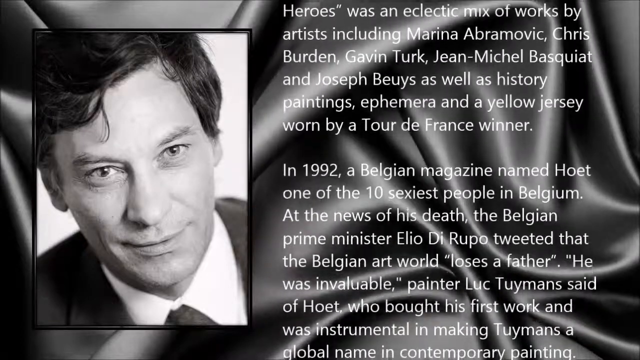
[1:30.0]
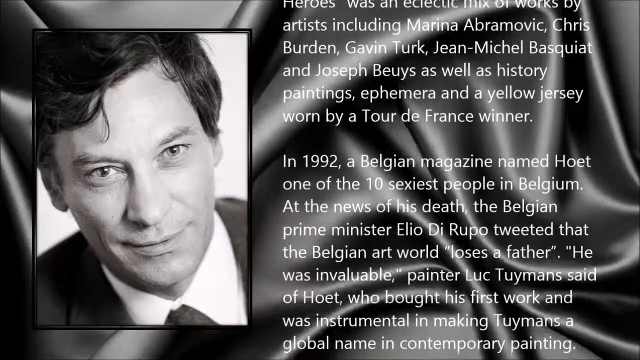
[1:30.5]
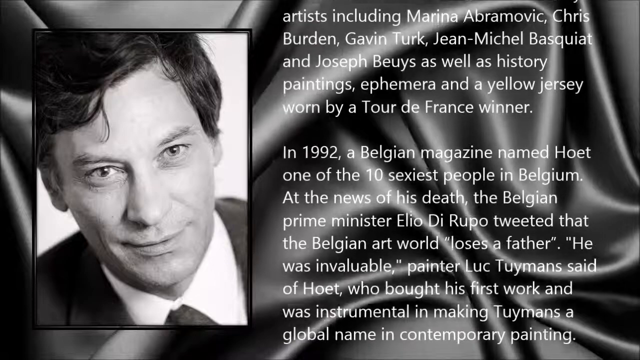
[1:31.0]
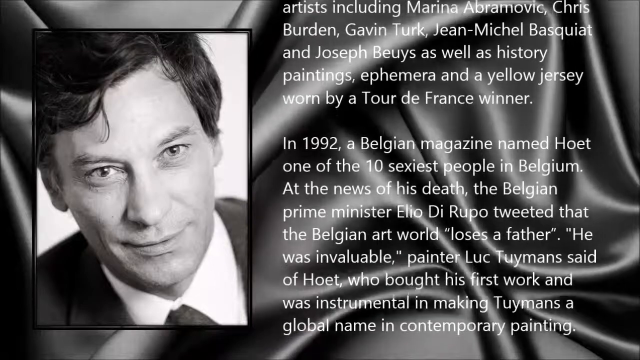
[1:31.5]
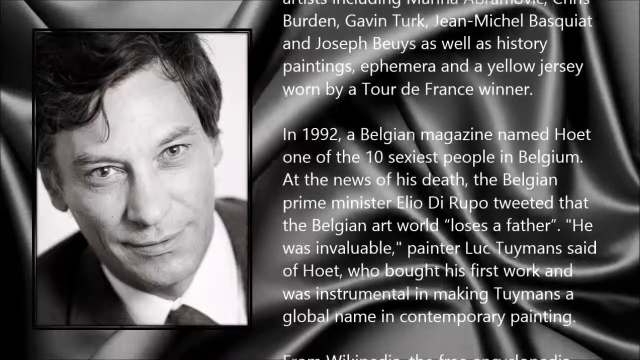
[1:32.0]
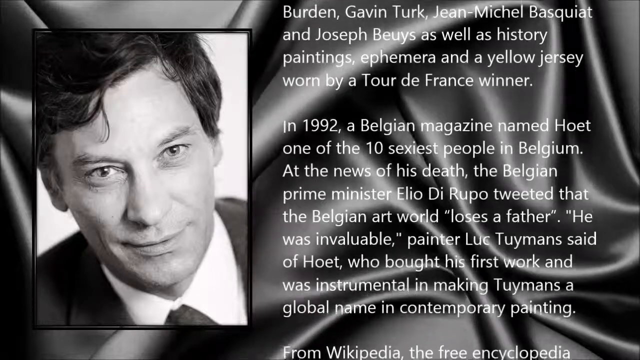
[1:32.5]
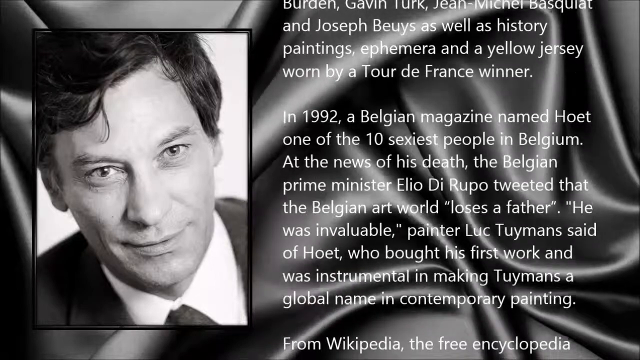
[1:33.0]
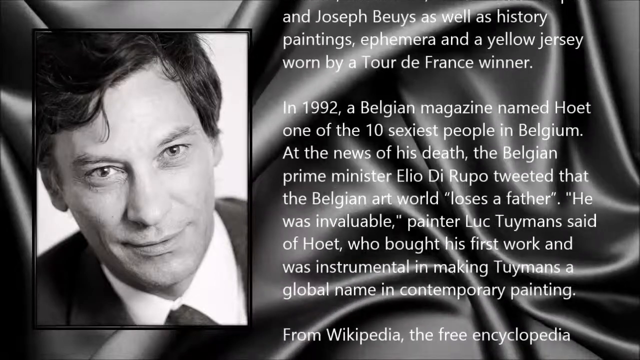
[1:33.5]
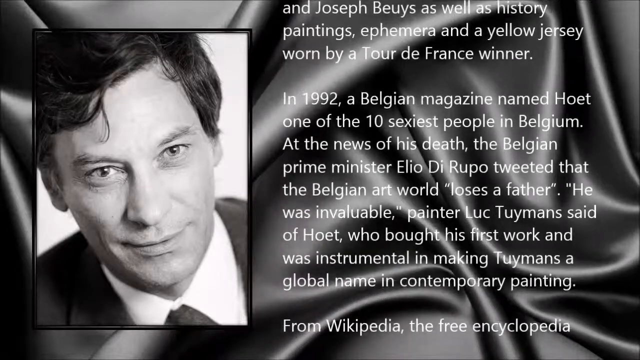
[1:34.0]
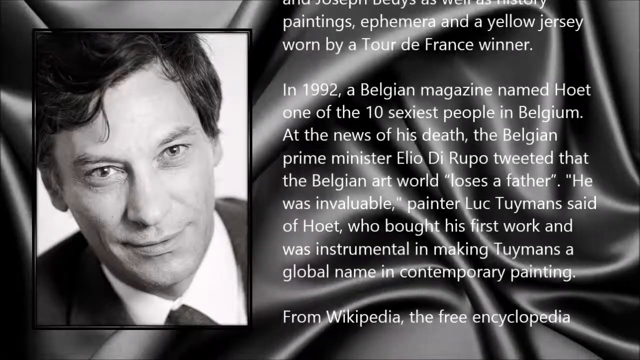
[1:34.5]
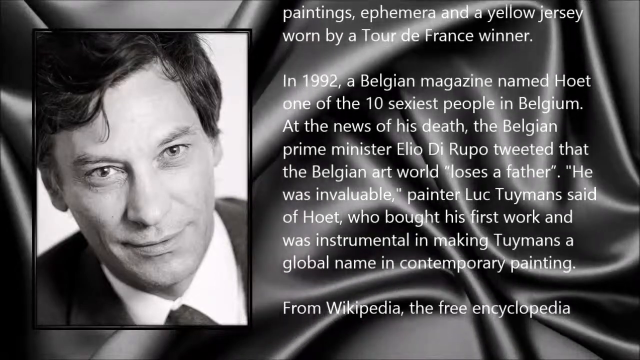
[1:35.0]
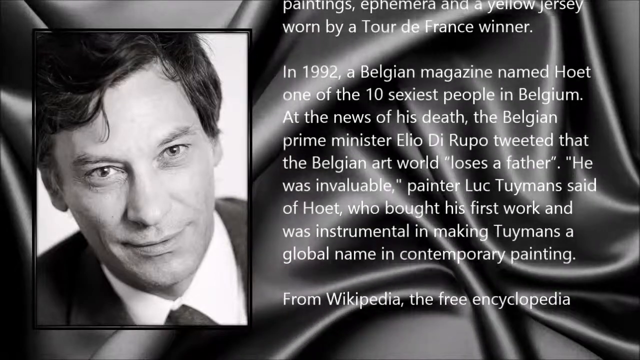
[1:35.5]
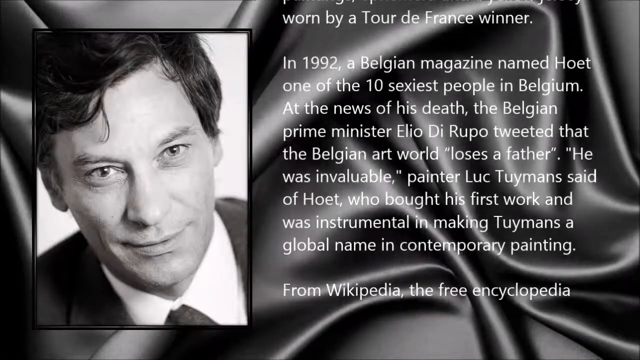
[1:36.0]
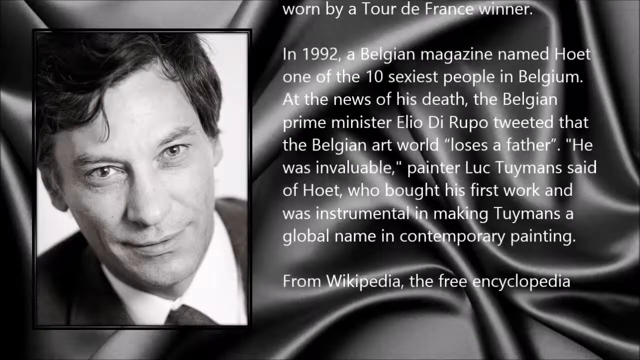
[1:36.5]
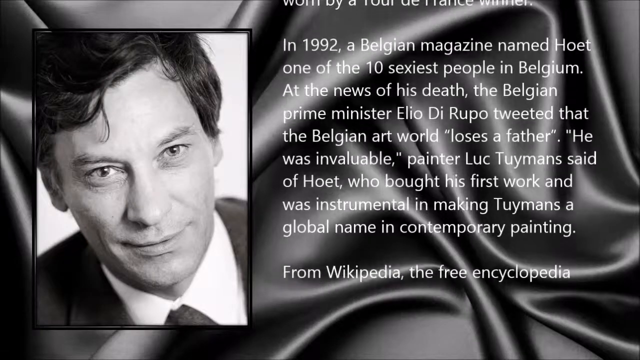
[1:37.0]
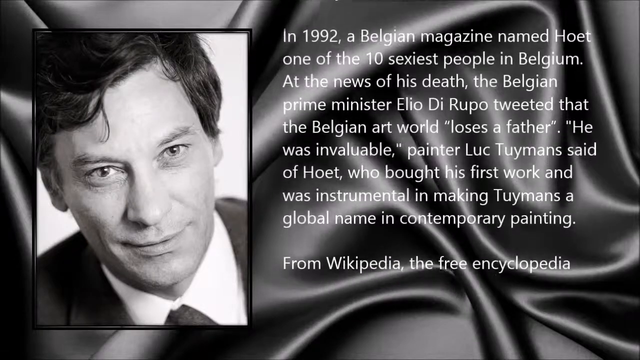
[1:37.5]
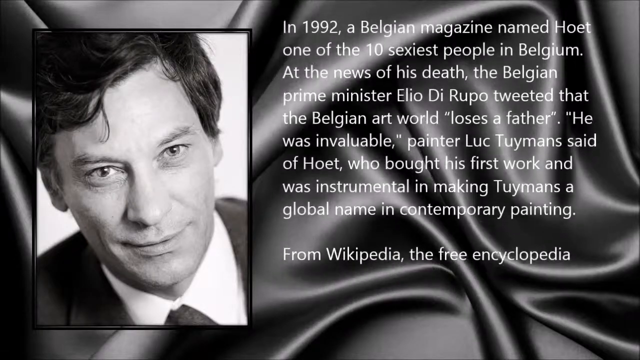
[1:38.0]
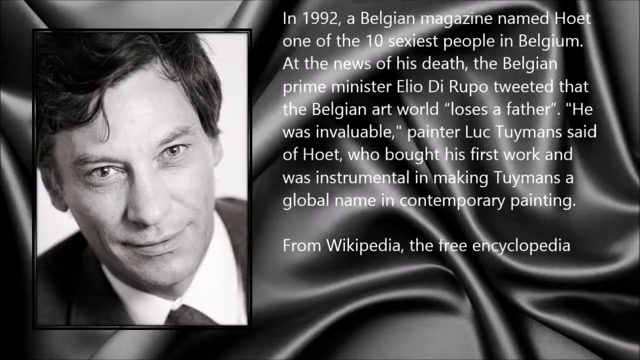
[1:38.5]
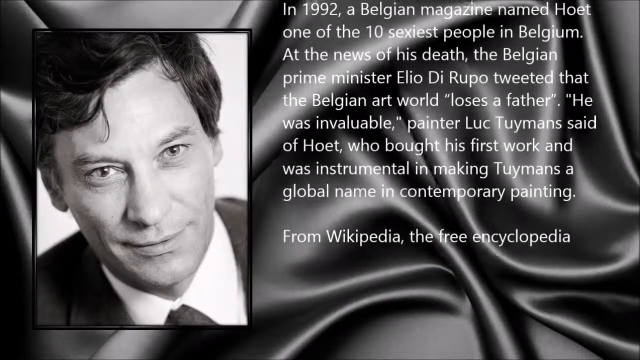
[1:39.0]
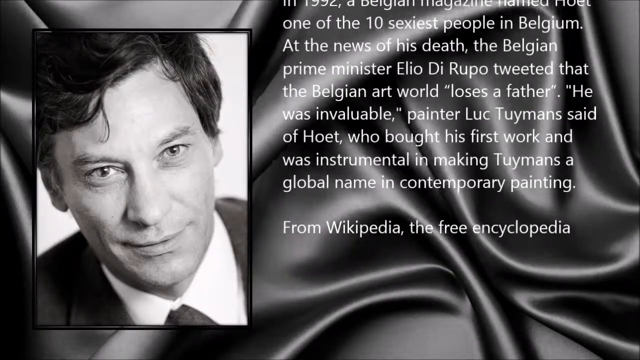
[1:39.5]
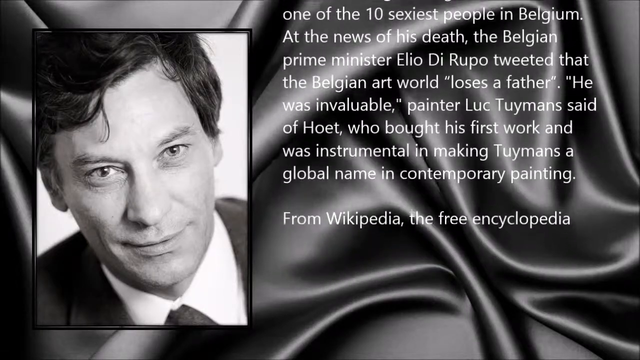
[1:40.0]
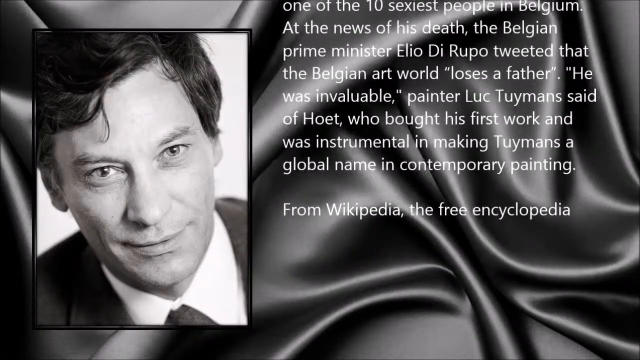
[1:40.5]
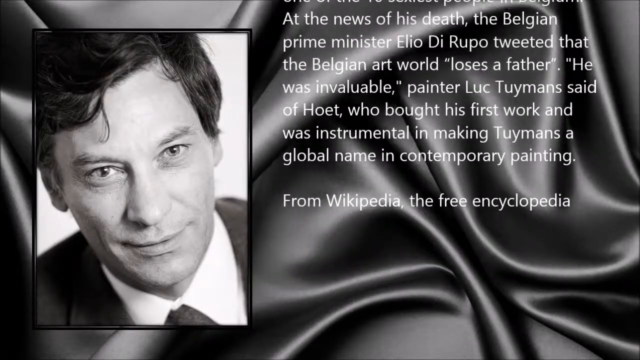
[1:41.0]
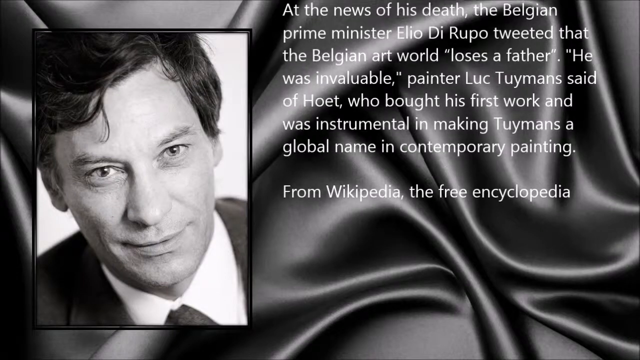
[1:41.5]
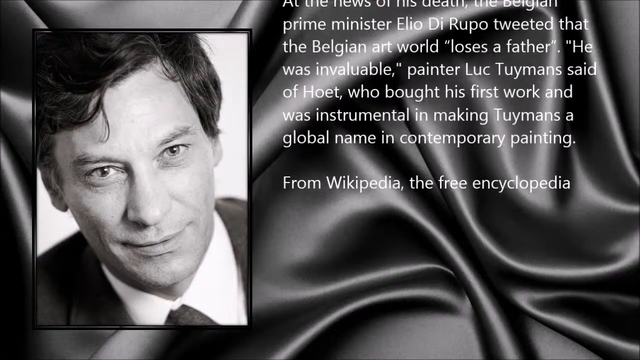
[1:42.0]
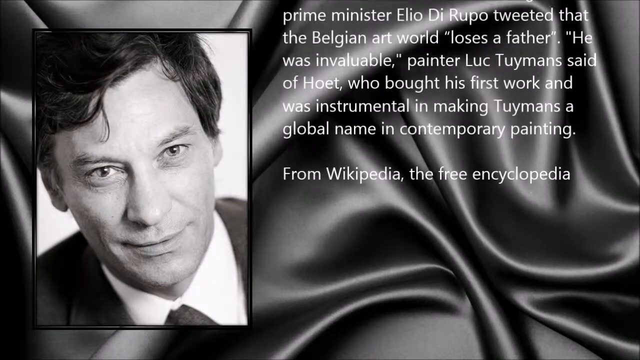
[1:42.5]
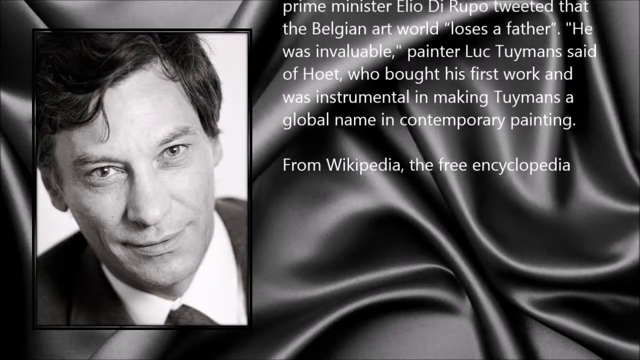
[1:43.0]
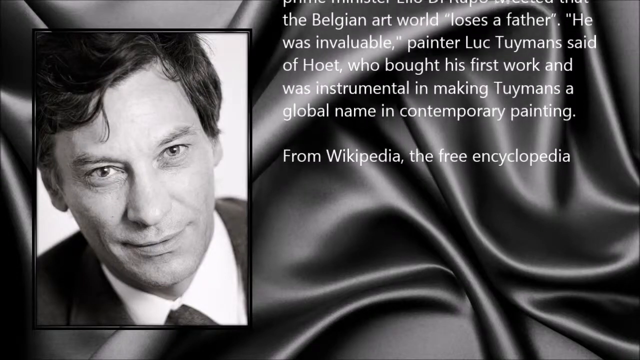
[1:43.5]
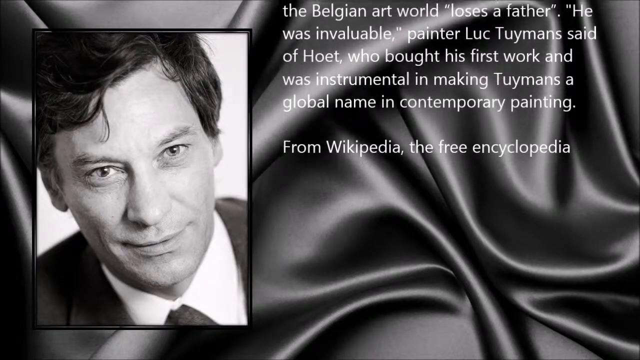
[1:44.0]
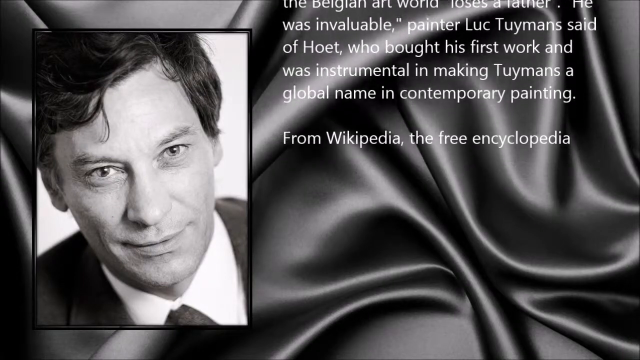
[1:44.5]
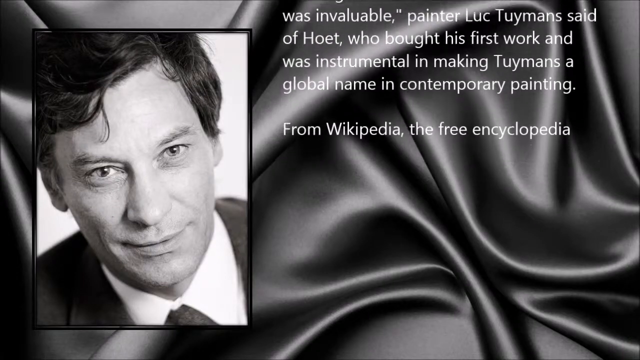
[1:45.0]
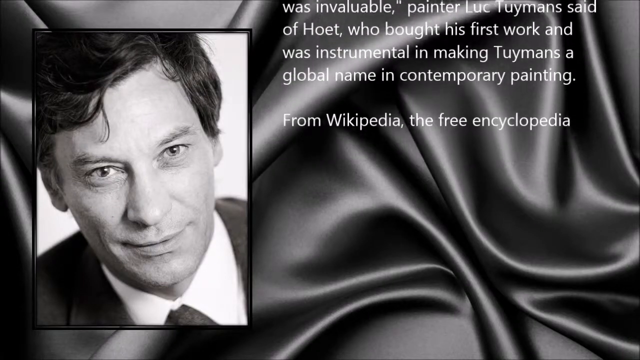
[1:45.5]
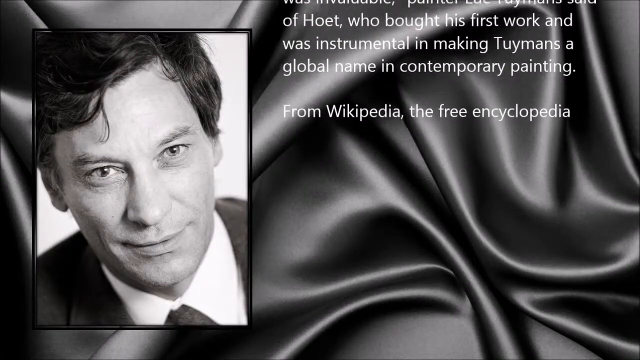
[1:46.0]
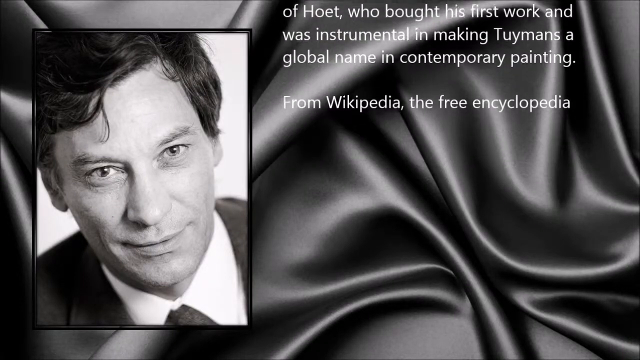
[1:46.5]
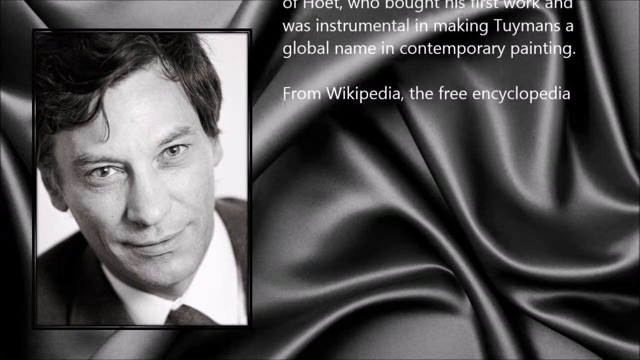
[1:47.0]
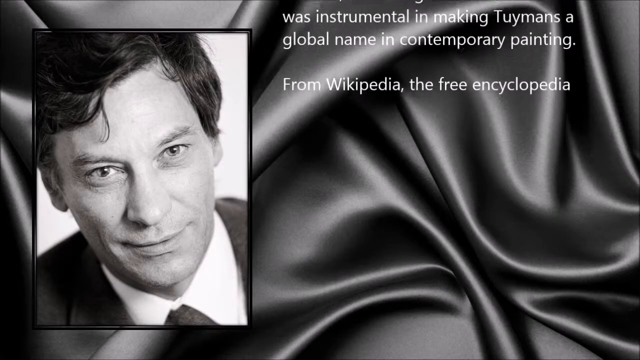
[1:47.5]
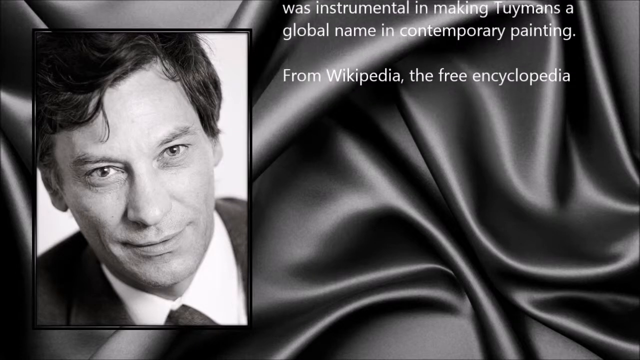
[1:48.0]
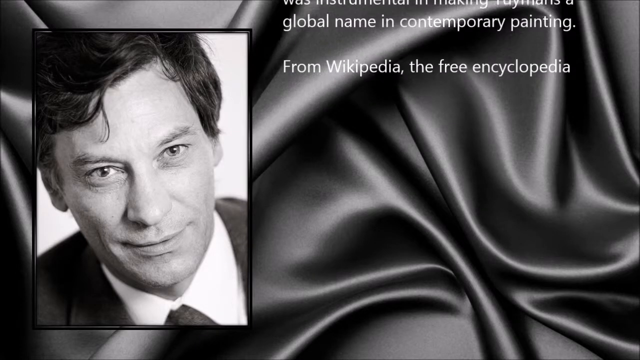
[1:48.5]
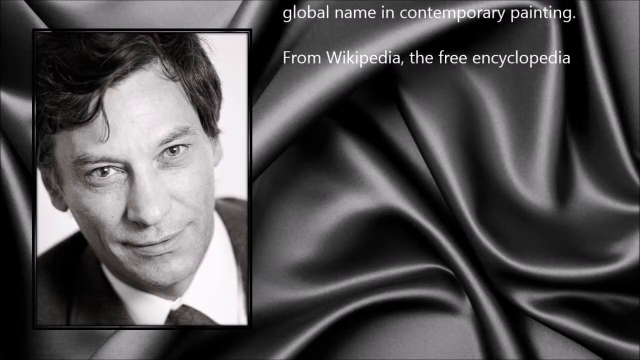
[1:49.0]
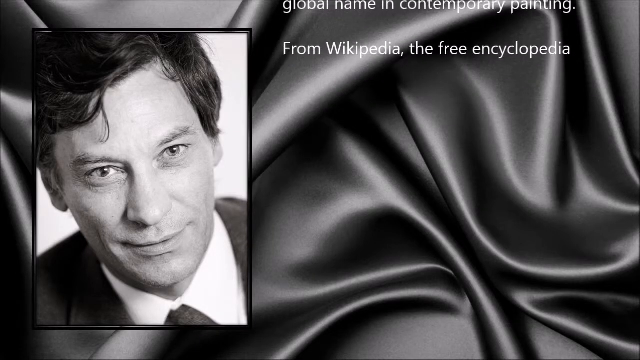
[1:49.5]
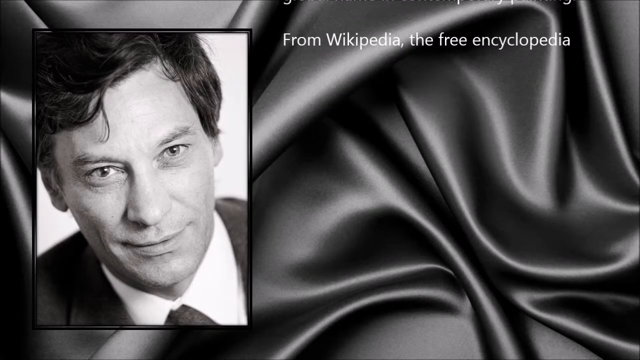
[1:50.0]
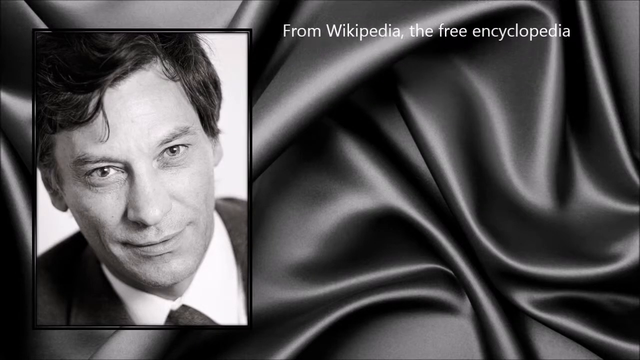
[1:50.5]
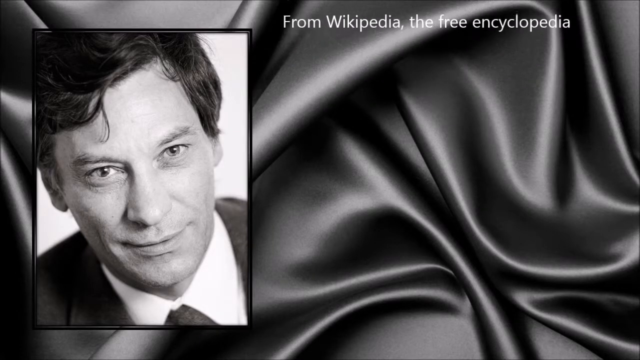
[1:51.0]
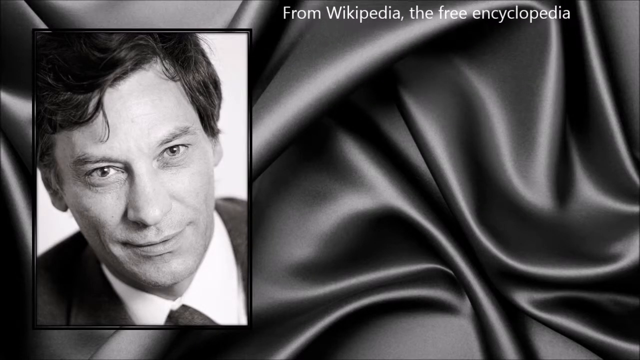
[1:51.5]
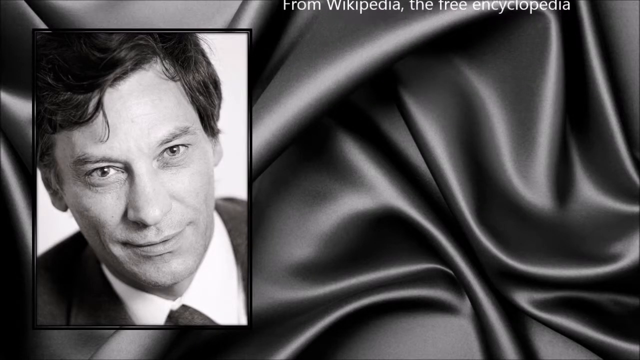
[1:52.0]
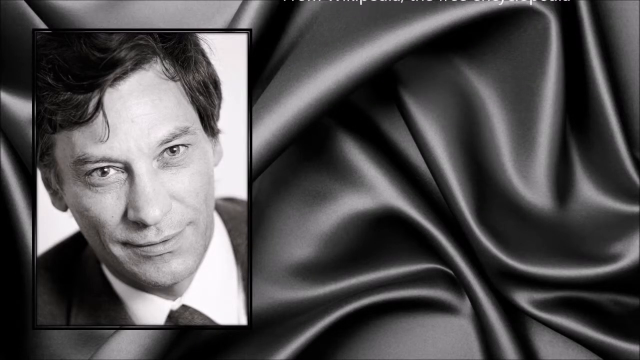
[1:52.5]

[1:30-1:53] The text completes the sentence: "He was invaluable painter Luc Taimons said of Hoet who bought his first work and was instrumental in making Taimons a global name in contemporary painting." After a small space it reads "from Wikipedia, the free encyclopedia". In the picture of Hoet on the left, he has dark hair about 10 centimeters long, mostly straight with a slight curl, and a slight curl hanging on his forehead. He has a bit of a creepy stare, piercing eyes, a pretty large, very prominent nose, and a large-ish, flat-ish mouth. The words keep rolling upwards until they completely disappear off the screen, and then nothing else happens.